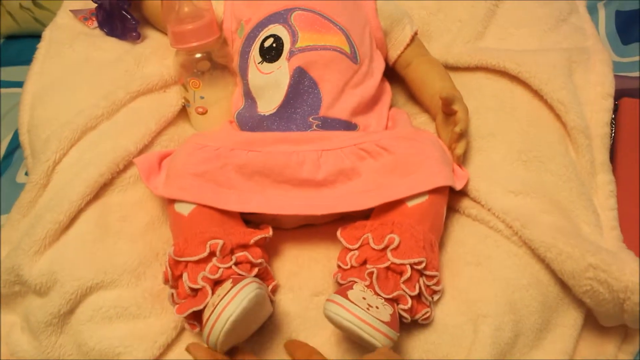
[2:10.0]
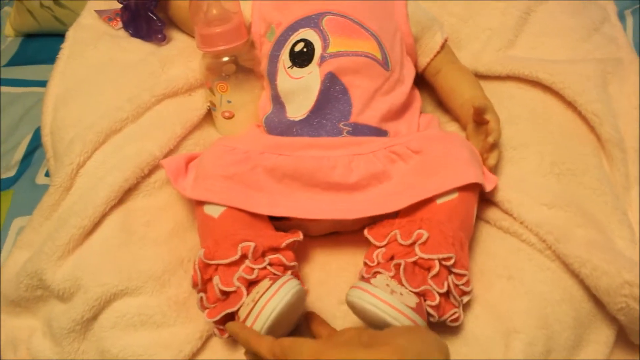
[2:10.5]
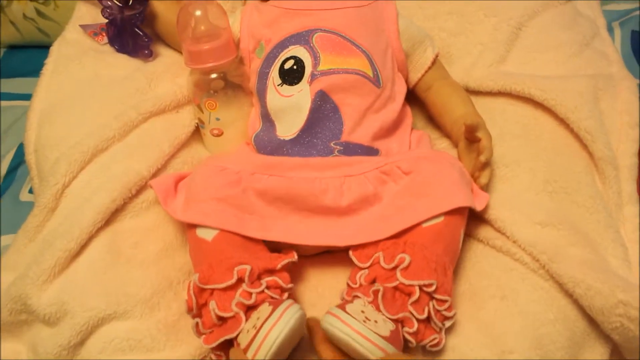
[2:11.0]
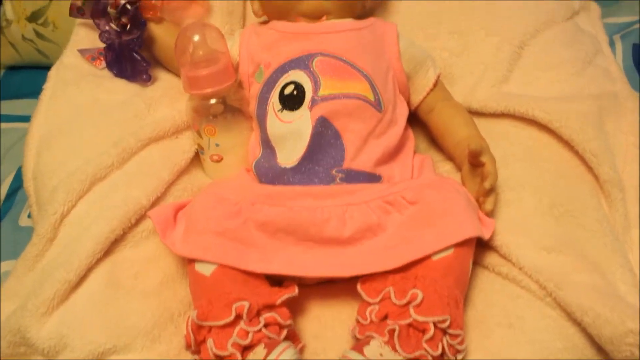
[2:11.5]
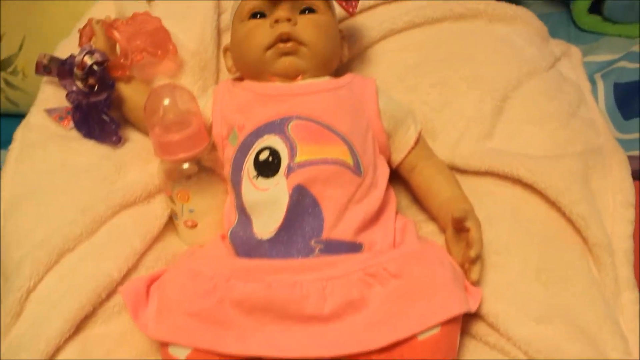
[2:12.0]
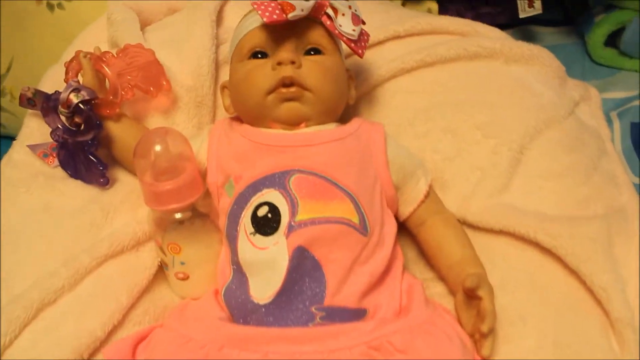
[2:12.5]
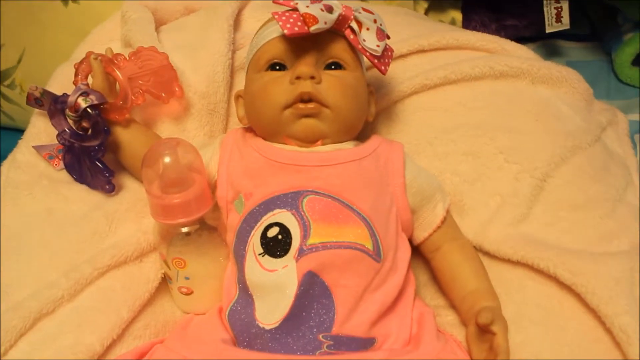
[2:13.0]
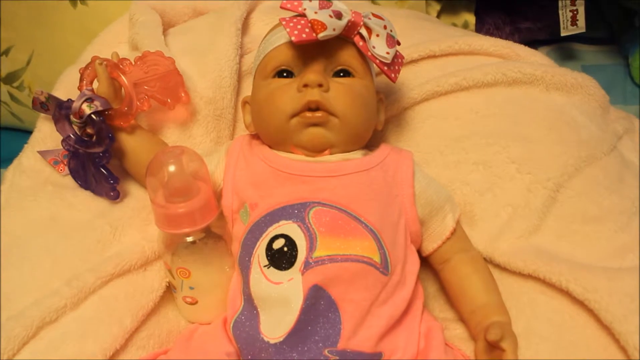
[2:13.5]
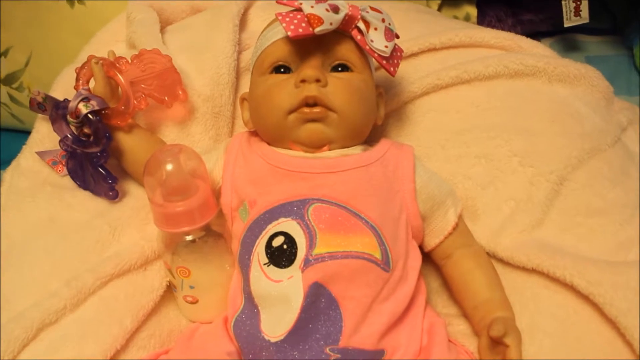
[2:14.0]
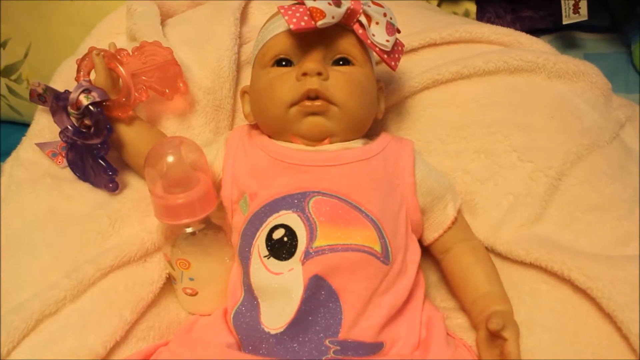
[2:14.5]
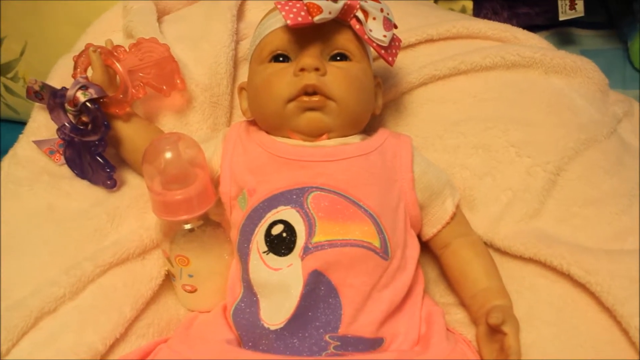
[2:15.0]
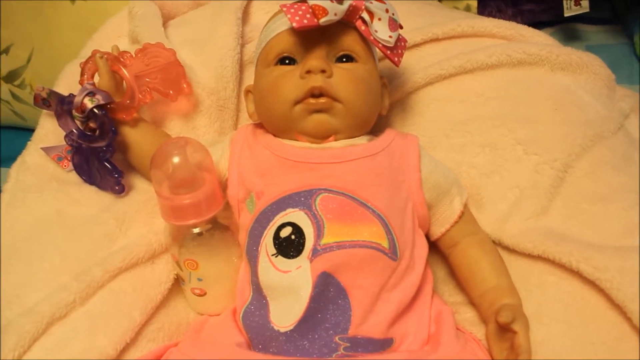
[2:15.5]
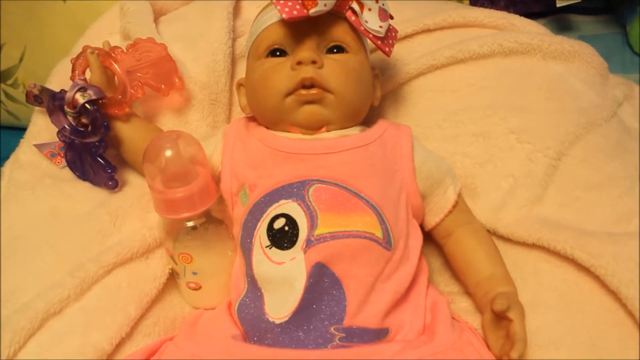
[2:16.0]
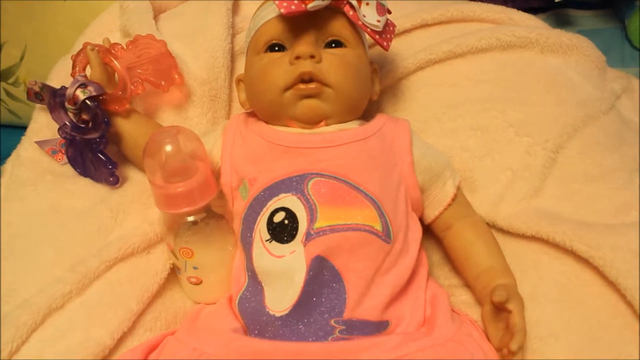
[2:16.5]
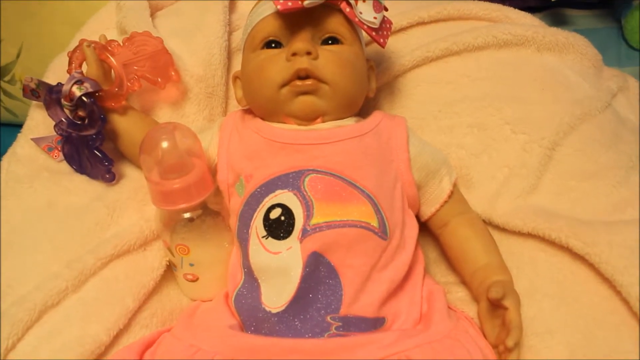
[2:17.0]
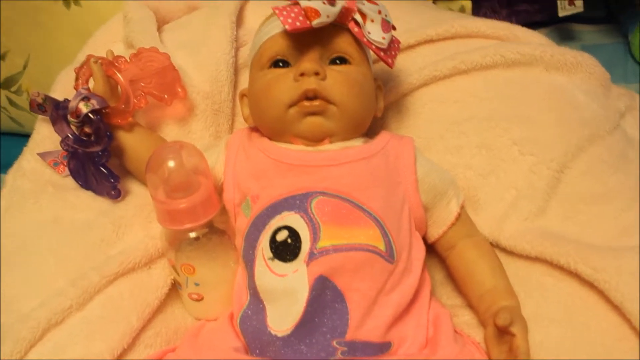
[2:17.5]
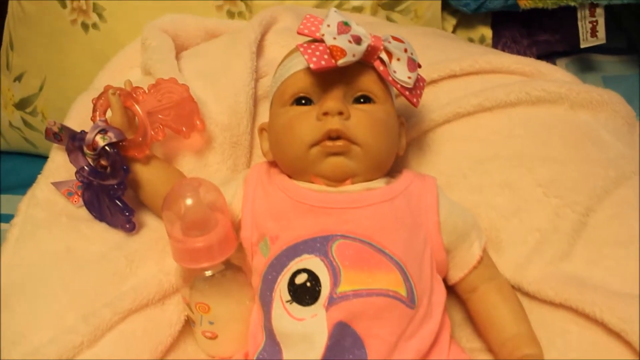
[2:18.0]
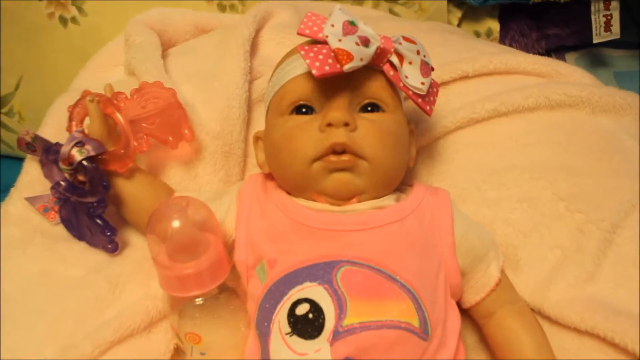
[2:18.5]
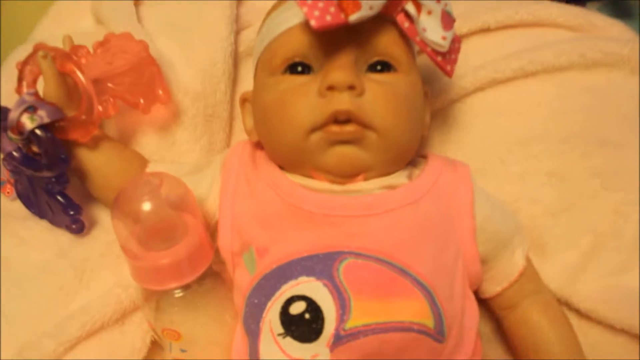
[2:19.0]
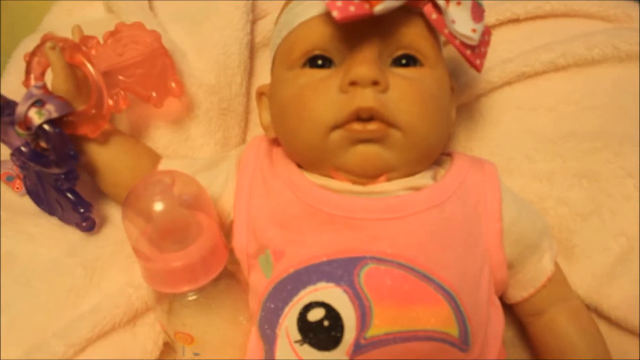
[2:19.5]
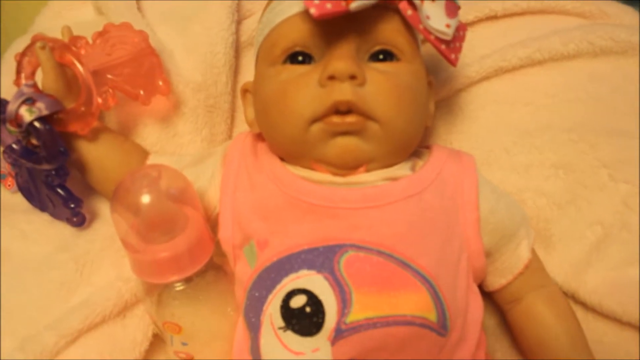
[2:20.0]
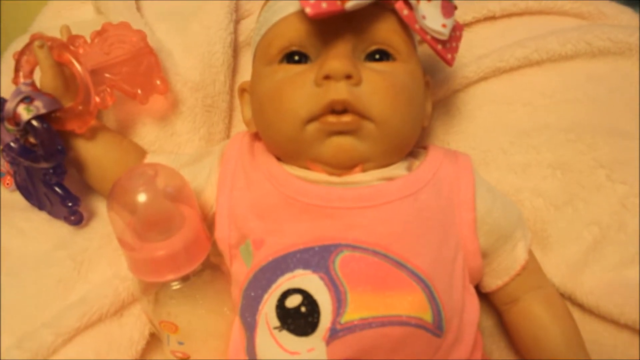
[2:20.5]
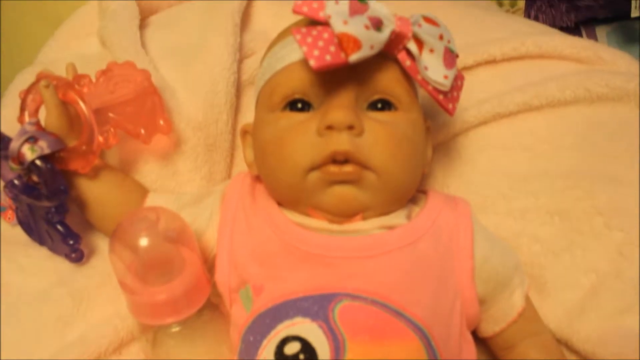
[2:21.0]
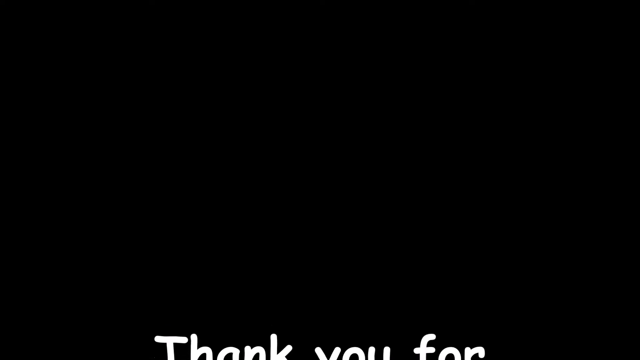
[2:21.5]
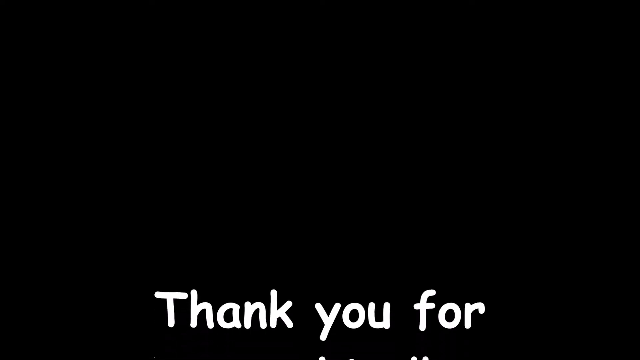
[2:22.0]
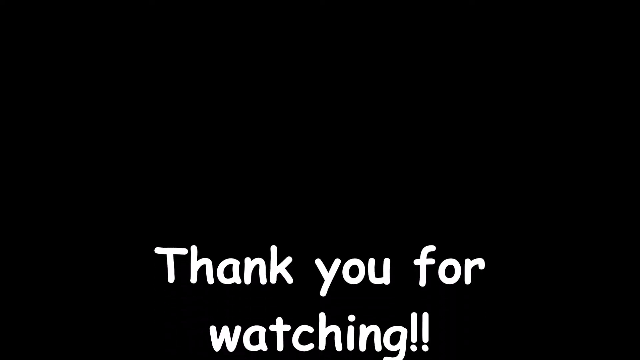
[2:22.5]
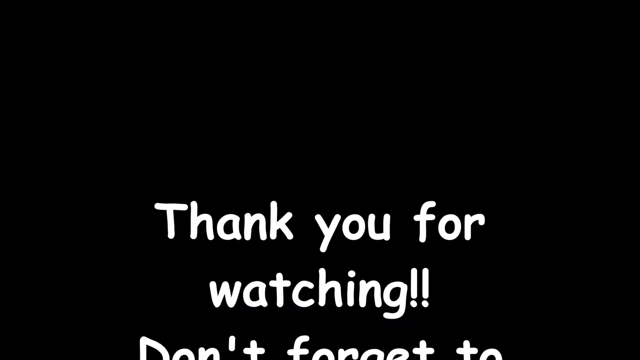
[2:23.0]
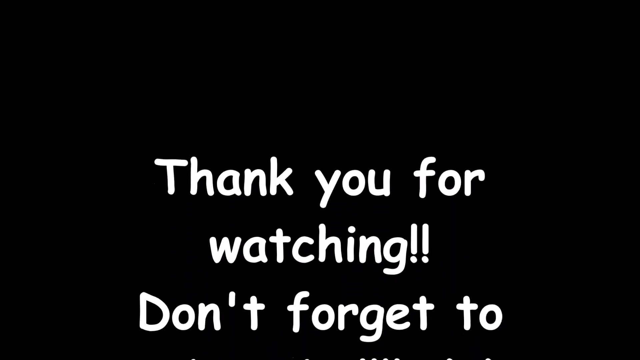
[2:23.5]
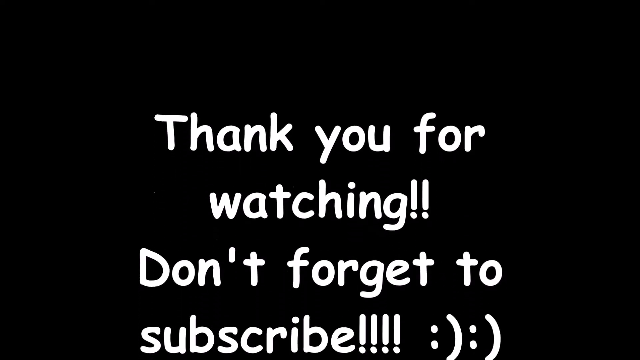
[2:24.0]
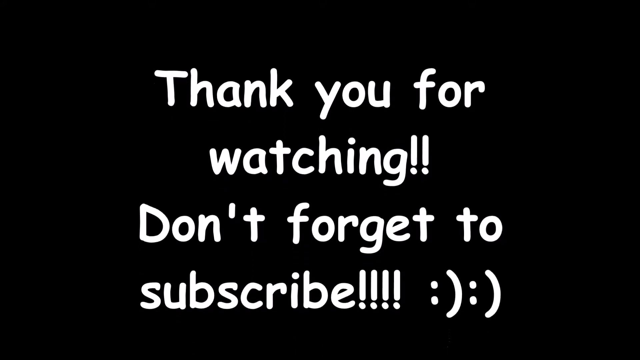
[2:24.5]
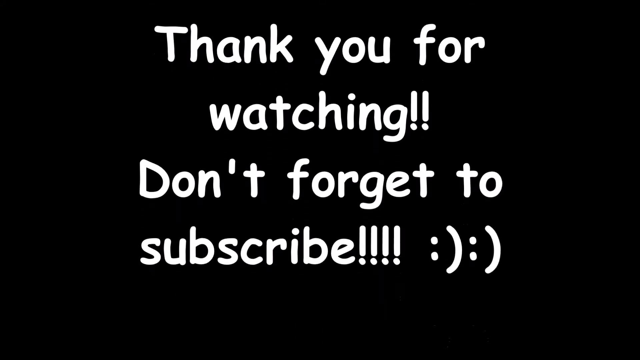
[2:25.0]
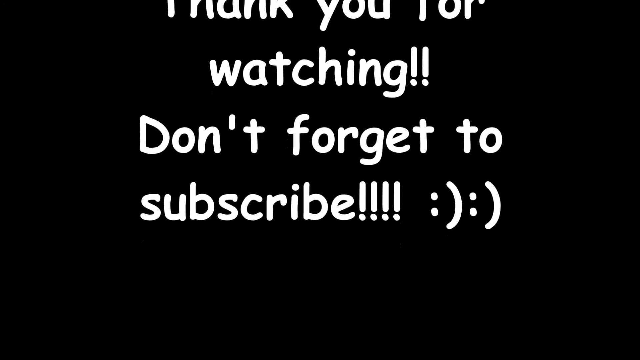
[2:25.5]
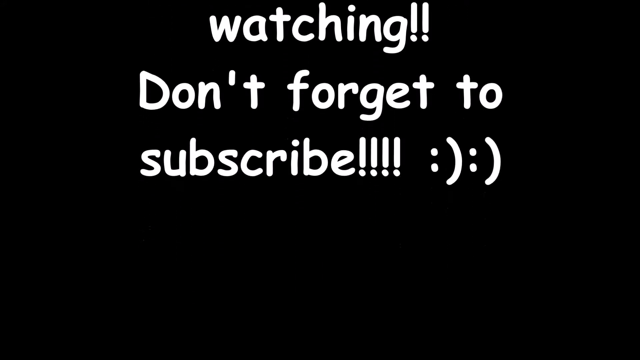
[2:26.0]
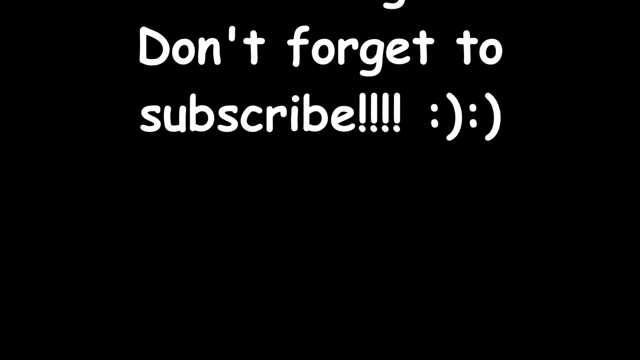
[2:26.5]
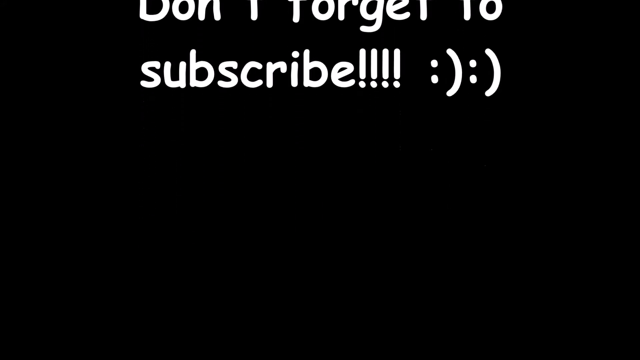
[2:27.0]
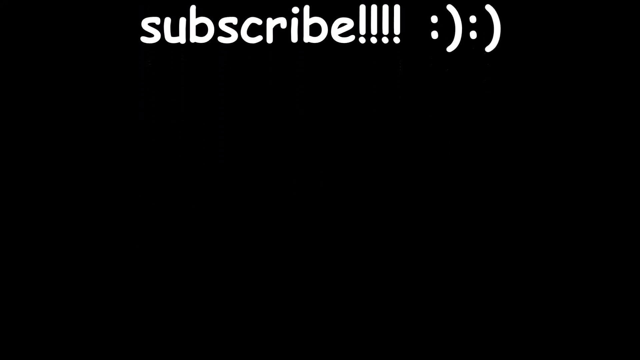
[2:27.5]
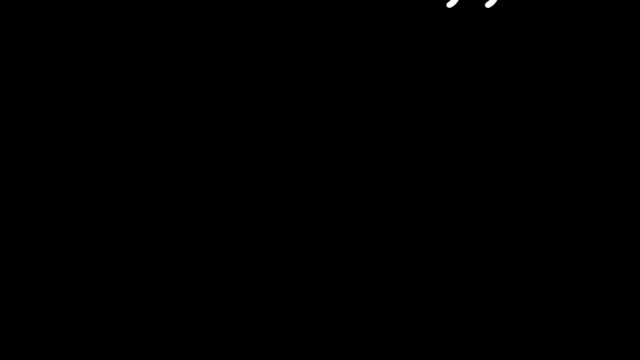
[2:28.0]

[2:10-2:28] The baby doll in a pink dress is shown in a wide, zoomed-out view, then the camera zooms in a little on the upper chest area. The dress has a purple and white flamingo design. A plastic bottle with some milk in it is to the side. The doll has on pink leg warmers and pink shoes and is lying on a blanket on top of a bed, with possibly a pillow in the background. There are some pink and purple plastic things on the doll's right hand. The video then changes to an outro screen with black and white lettering that says "thank you for watching, don't forget to subscribe" with two smiley faces, and ends on the black screen.